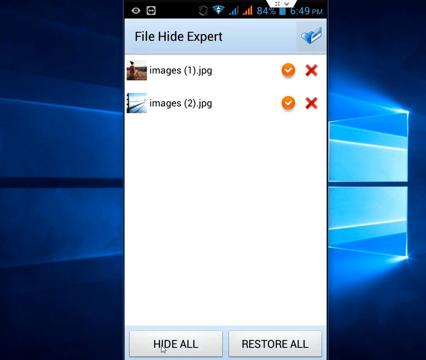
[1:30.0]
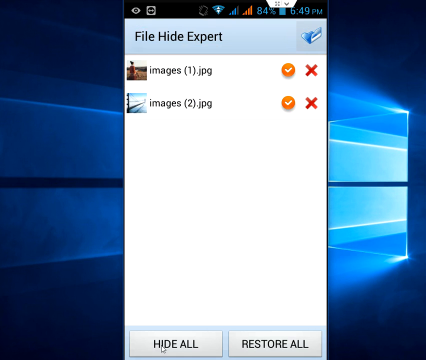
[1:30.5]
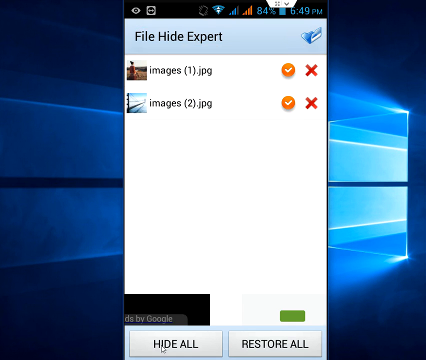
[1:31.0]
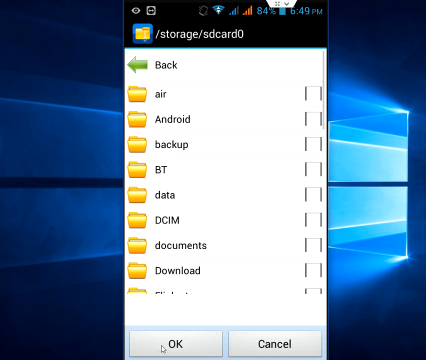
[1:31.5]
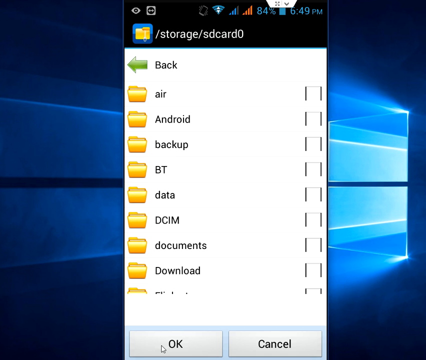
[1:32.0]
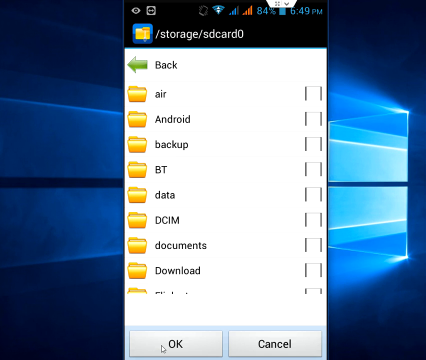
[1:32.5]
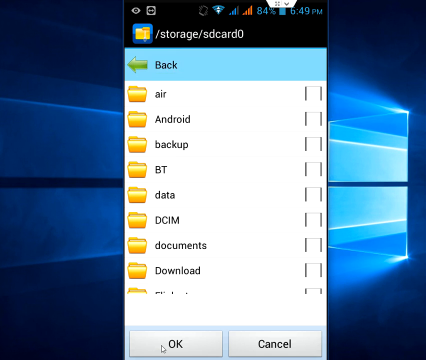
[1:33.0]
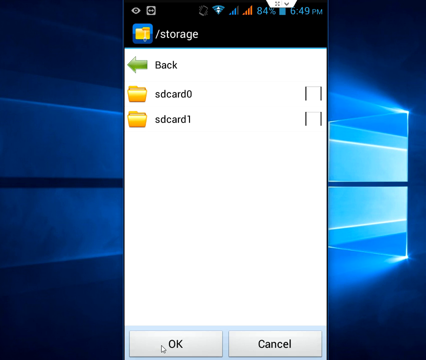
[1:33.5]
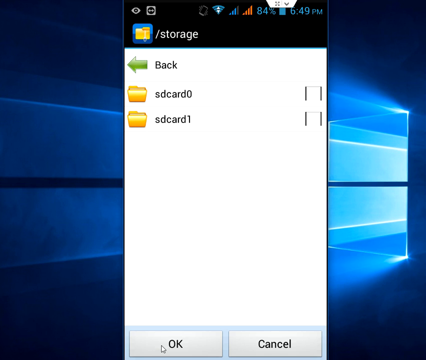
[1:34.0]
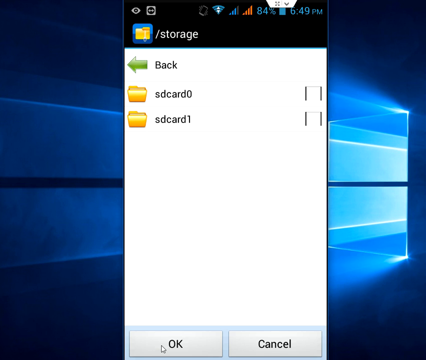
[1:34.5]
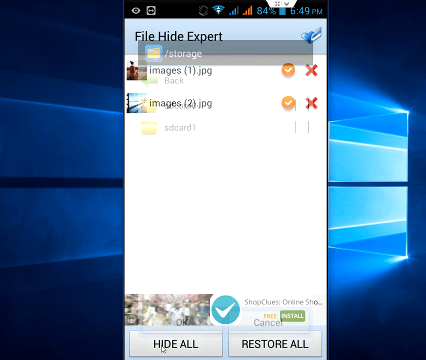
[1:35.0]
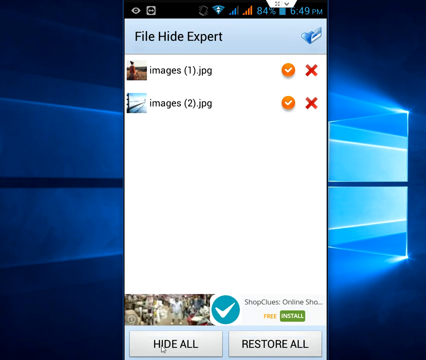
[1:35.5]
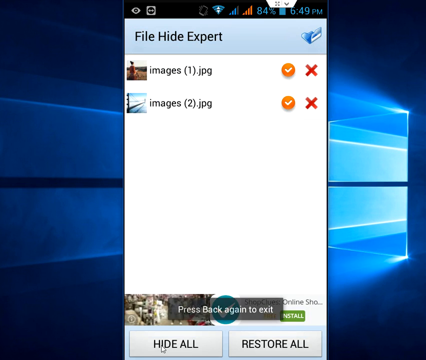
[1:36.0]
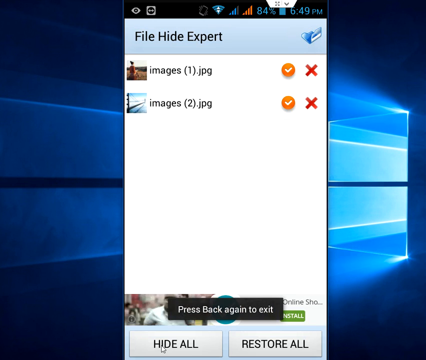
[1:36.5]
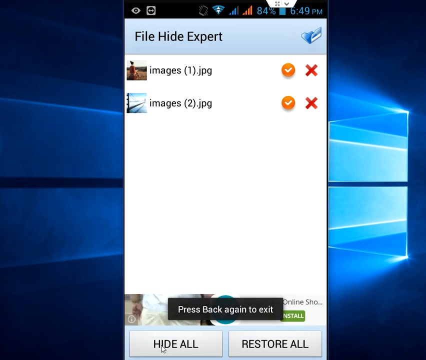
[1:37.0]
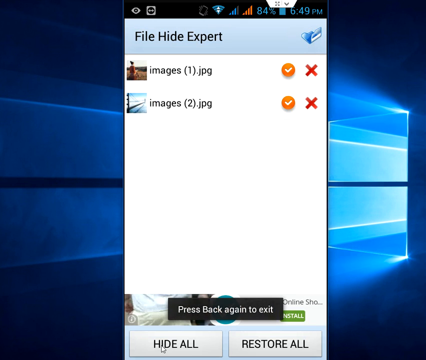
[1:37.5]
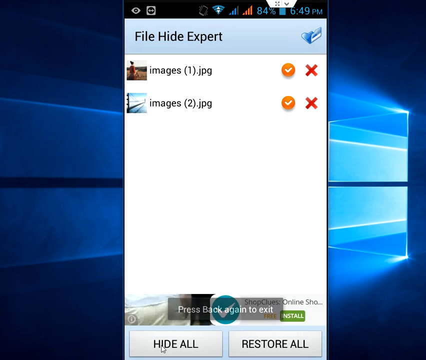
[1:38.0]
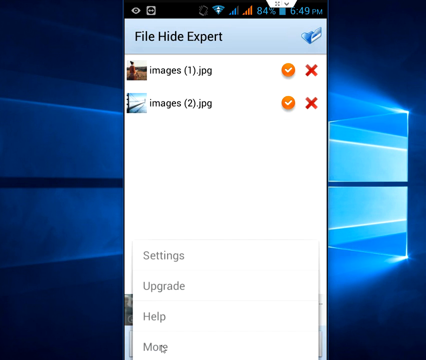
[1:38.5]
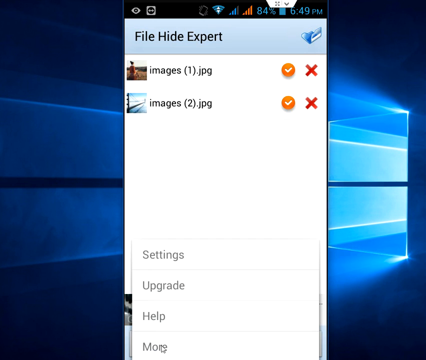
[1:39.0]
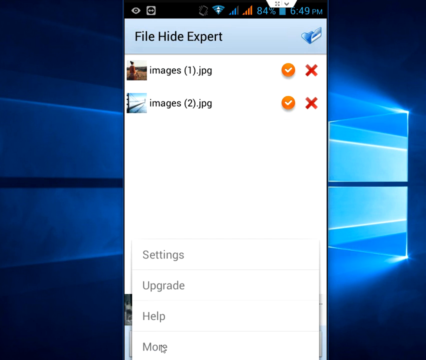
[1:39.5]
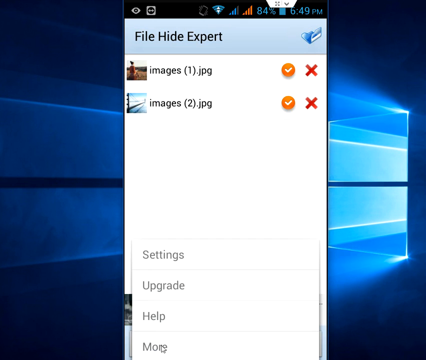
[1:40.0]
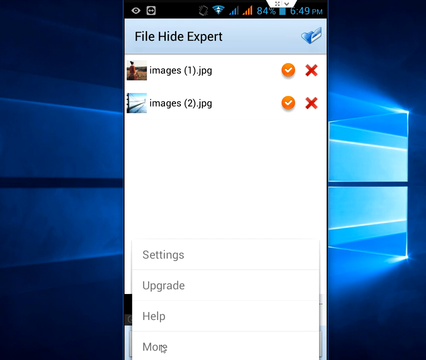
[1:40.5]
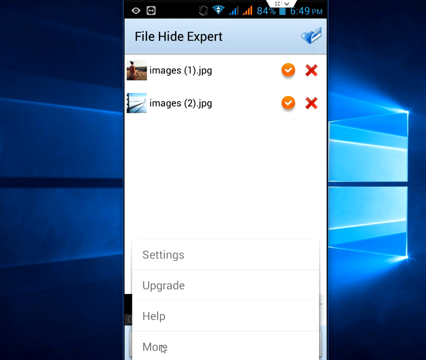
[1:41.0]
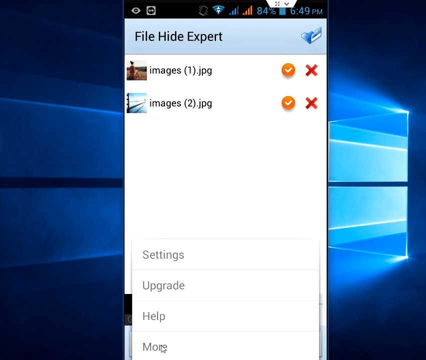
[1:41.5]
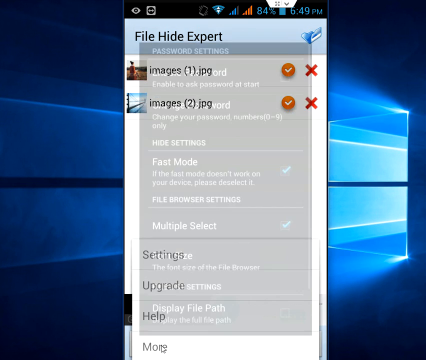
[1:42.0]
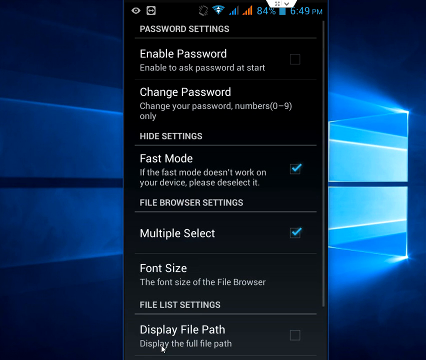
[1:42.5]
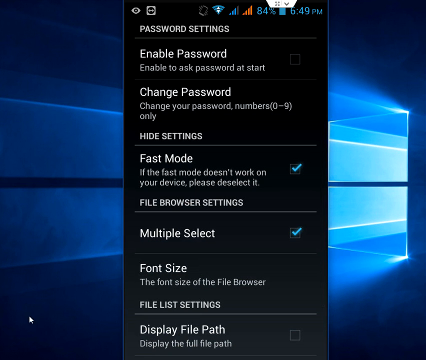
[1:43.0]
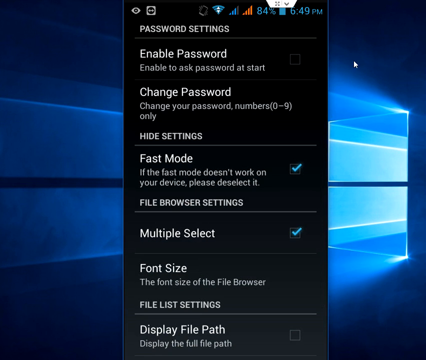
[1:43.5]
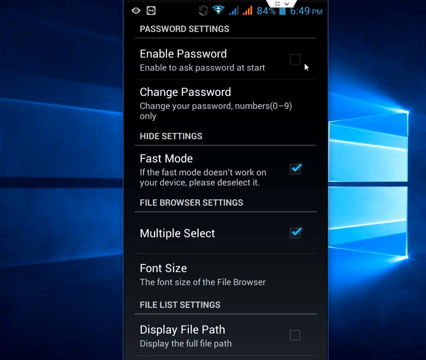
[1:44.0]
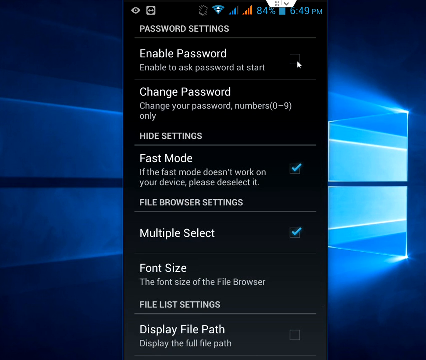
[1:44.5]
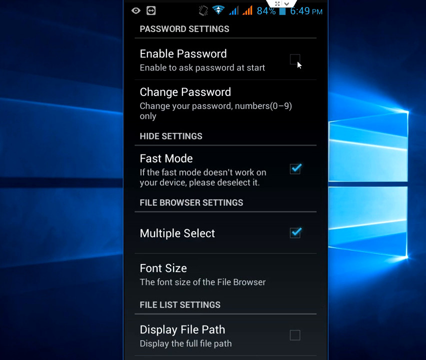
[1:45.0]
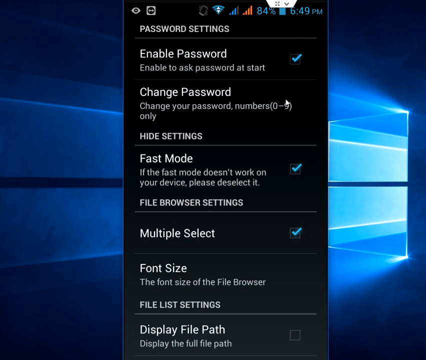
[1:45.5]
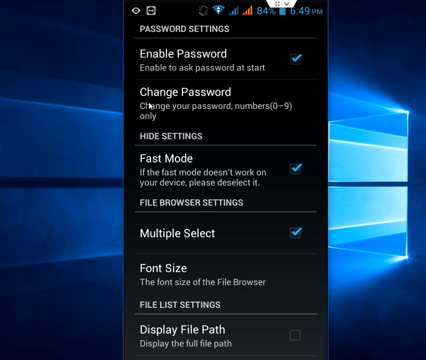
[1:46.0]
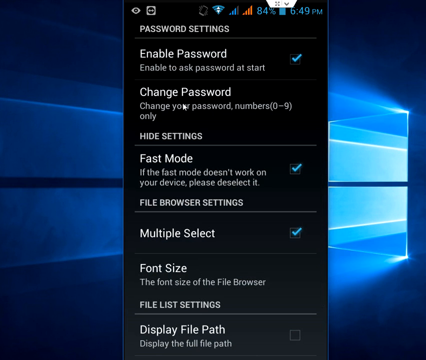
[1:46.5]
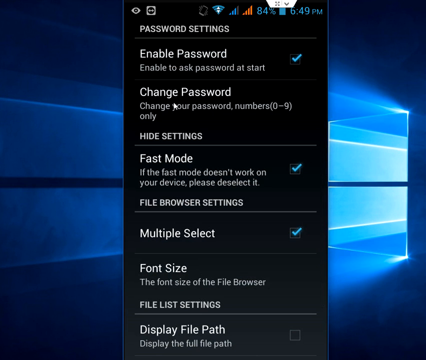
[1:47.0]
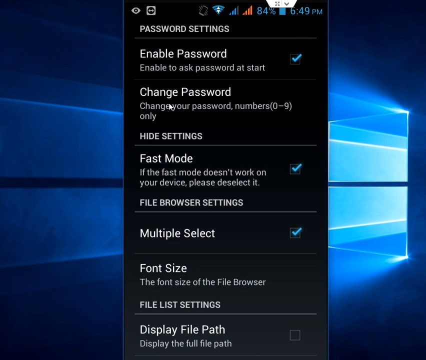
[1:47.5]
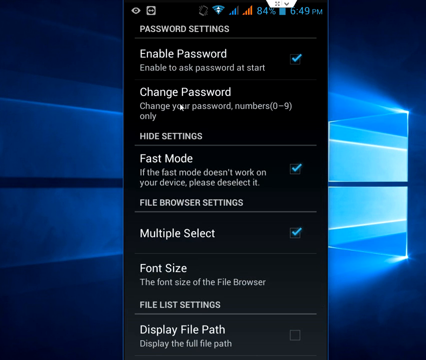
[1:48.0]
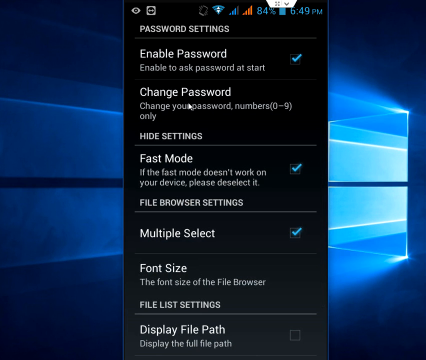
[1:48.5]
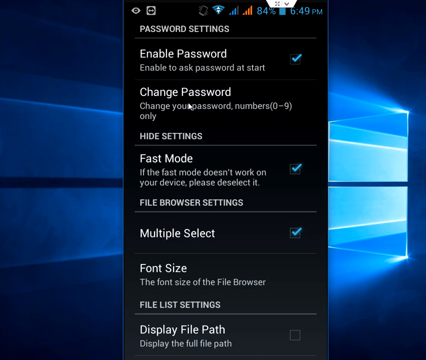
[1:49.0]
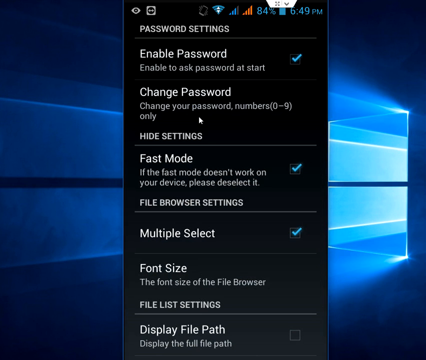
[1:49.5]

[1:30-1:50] The File Hide Expert contents, the two images, are shown briefly before the screen jumps to a file directory page at the location storage/sdcard0. The user clicks the back button at the top, which leads to another directory titled "Storage," showing only two files in the storage folder. The screen jumps back to the File Hide Expert page with the two images, and a small box at the bottom reads "press back again to exit." That disappears, and a small menu pops up from the bottom of the screen with the options "Settings," "Upgrade," and "Help." The screen moves to a Password Settings menu showing various password-related settings. The user checks the box next to "Enable Password" with the mouse, then hovers over "Change Password," which brings up a pop-up to change the password.